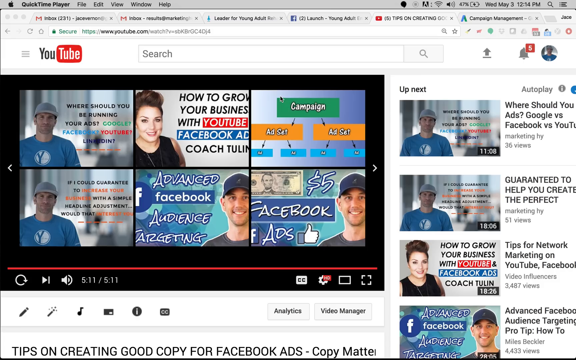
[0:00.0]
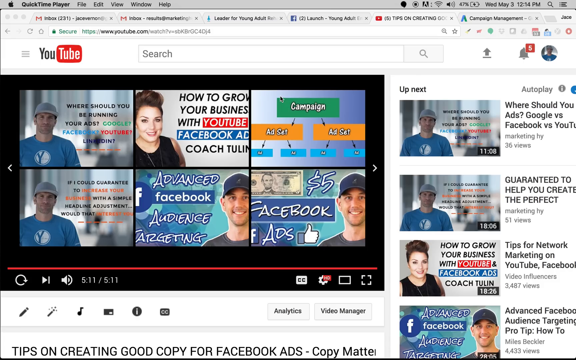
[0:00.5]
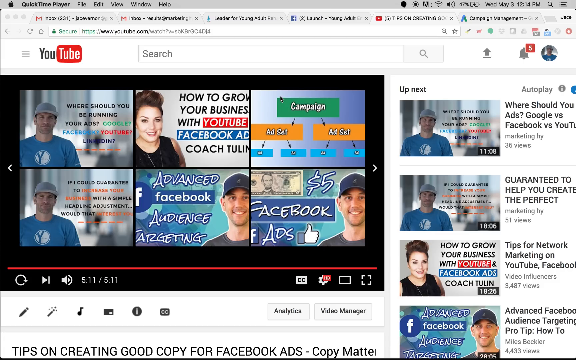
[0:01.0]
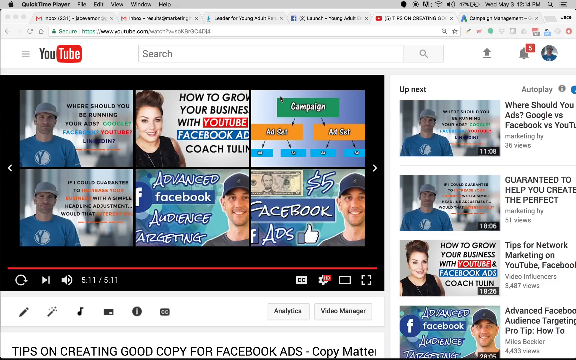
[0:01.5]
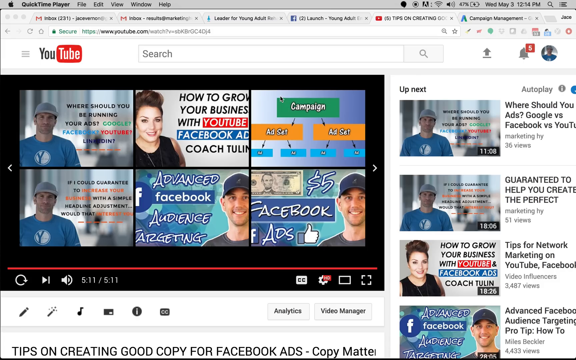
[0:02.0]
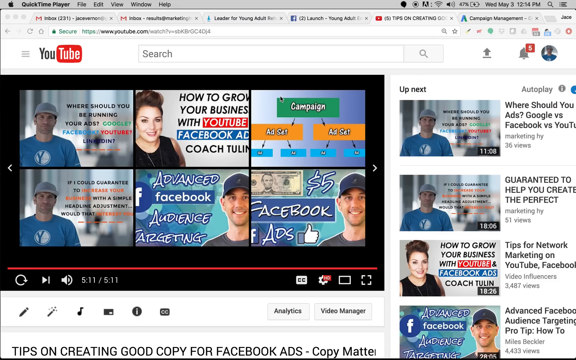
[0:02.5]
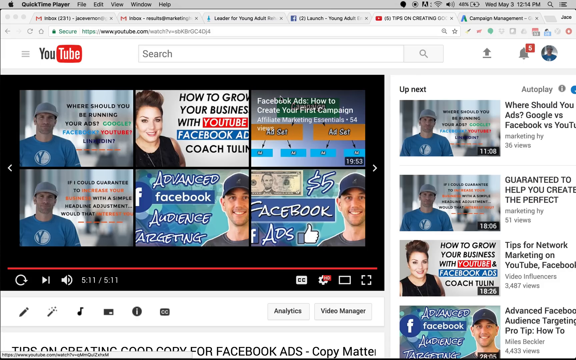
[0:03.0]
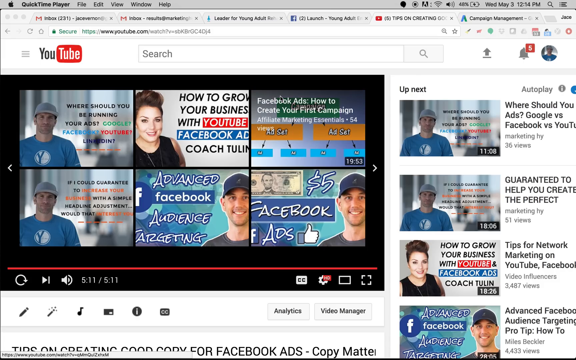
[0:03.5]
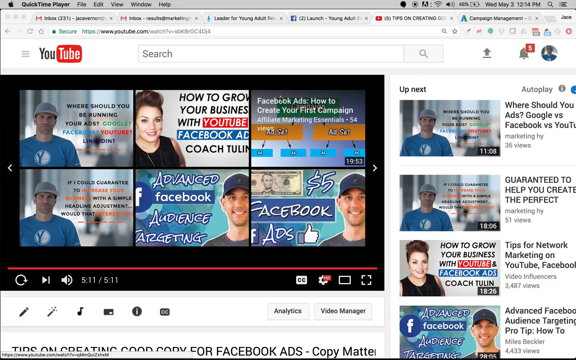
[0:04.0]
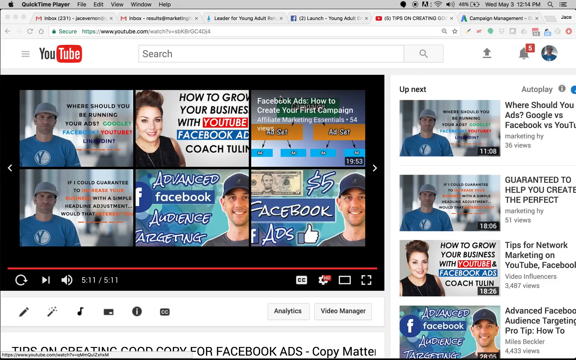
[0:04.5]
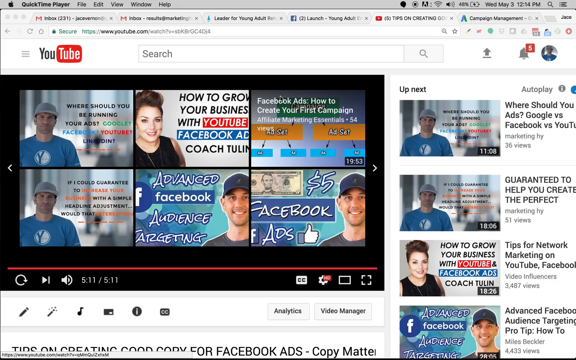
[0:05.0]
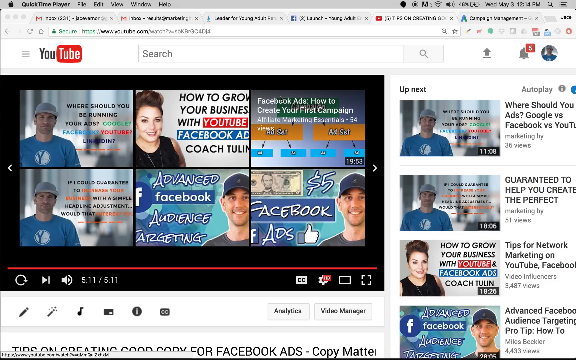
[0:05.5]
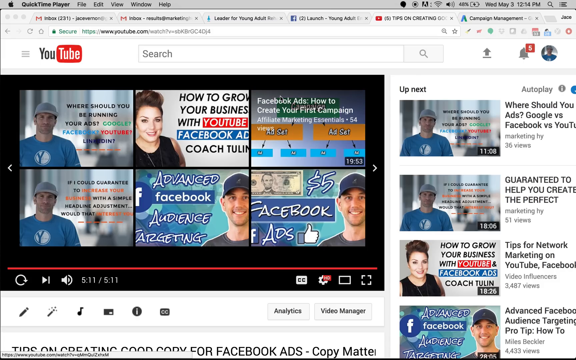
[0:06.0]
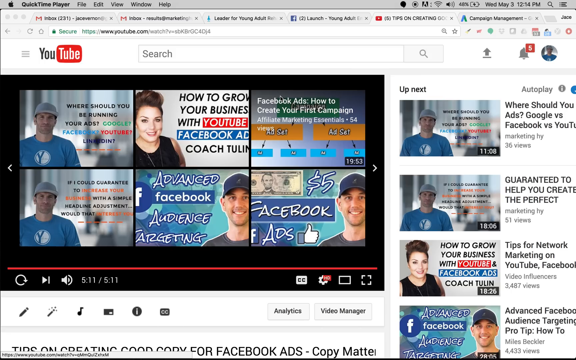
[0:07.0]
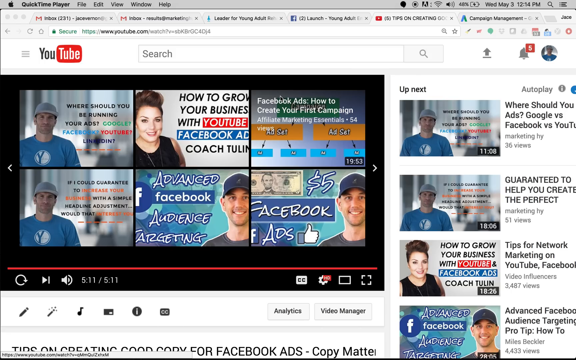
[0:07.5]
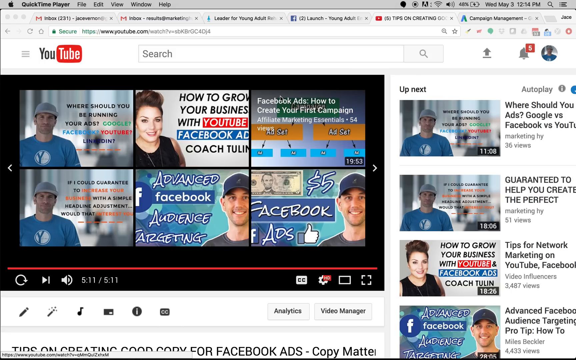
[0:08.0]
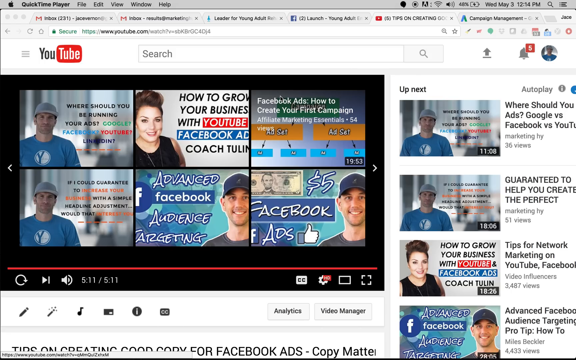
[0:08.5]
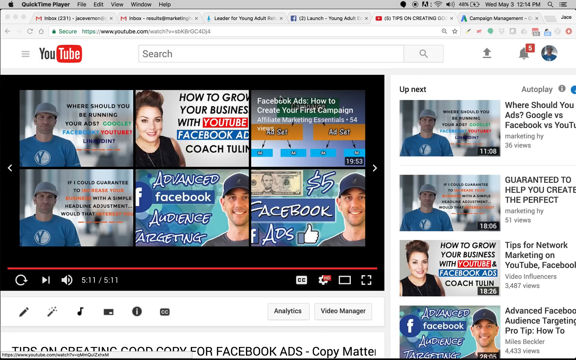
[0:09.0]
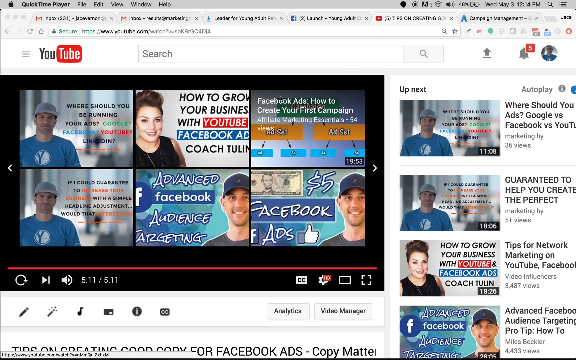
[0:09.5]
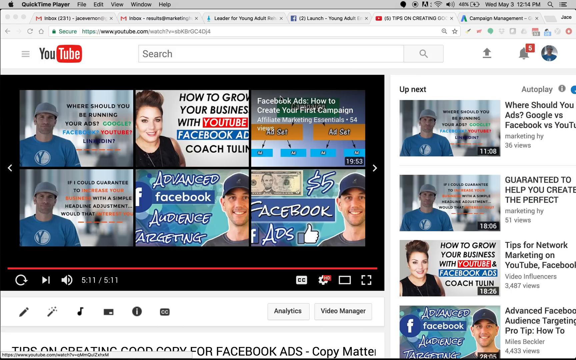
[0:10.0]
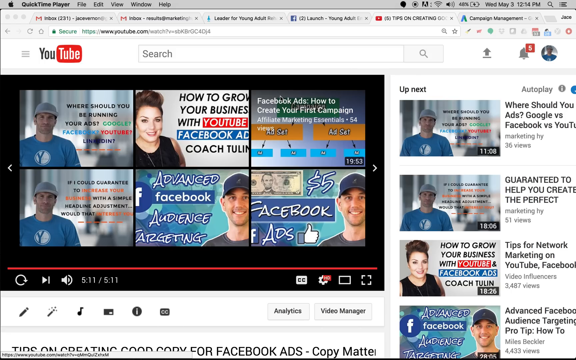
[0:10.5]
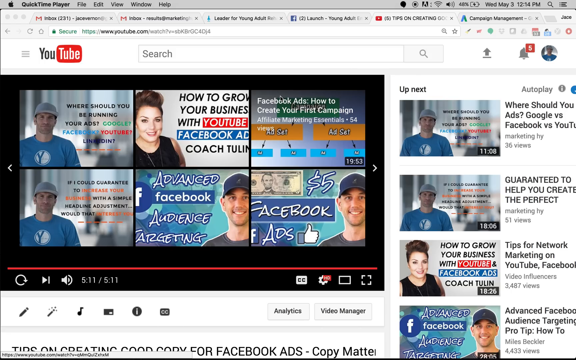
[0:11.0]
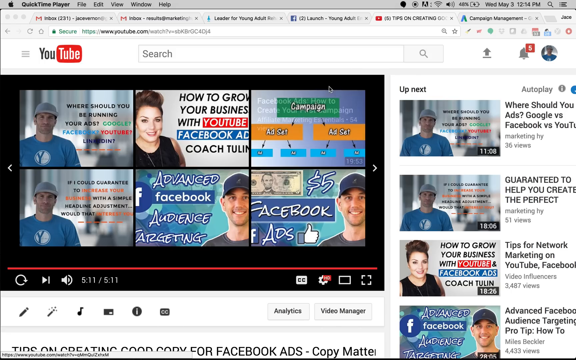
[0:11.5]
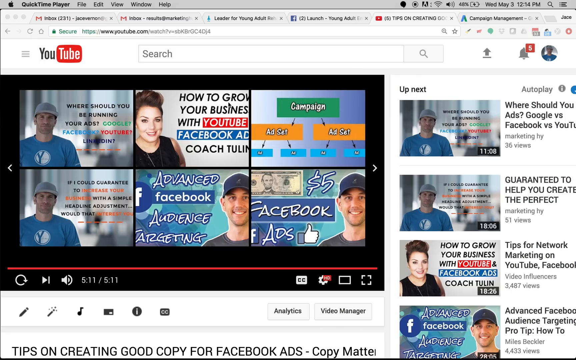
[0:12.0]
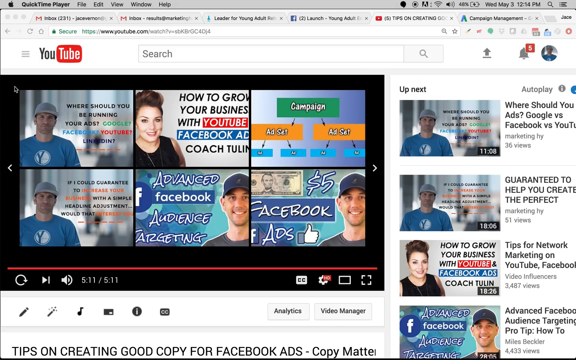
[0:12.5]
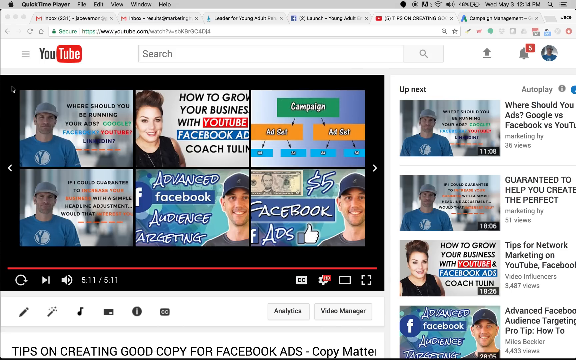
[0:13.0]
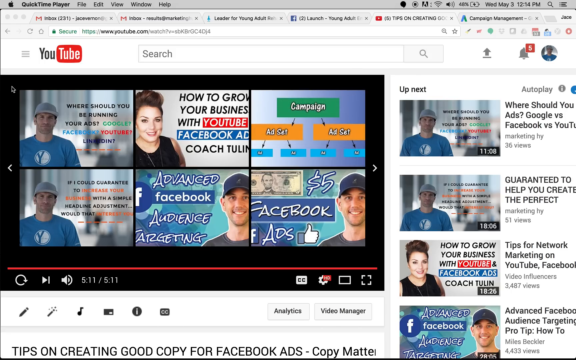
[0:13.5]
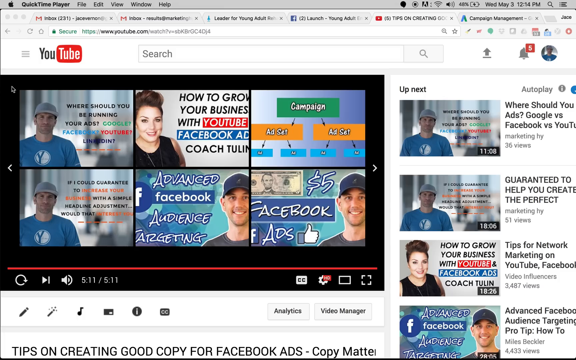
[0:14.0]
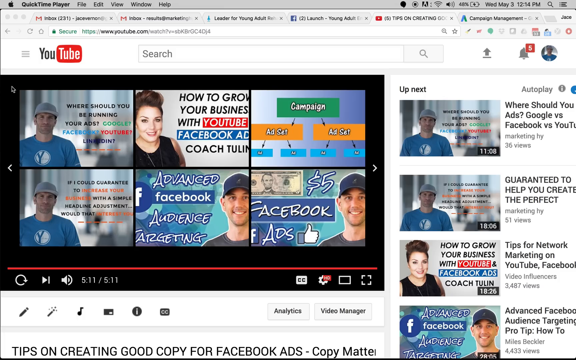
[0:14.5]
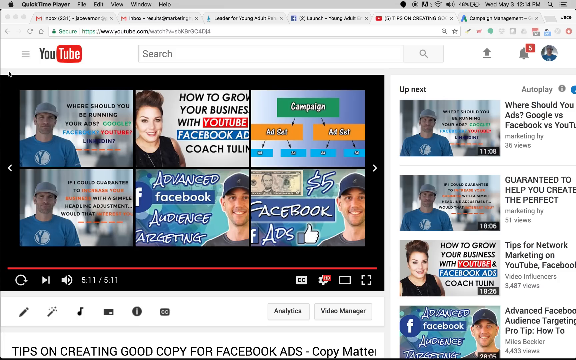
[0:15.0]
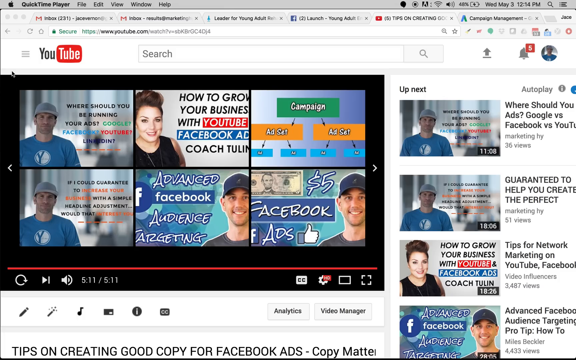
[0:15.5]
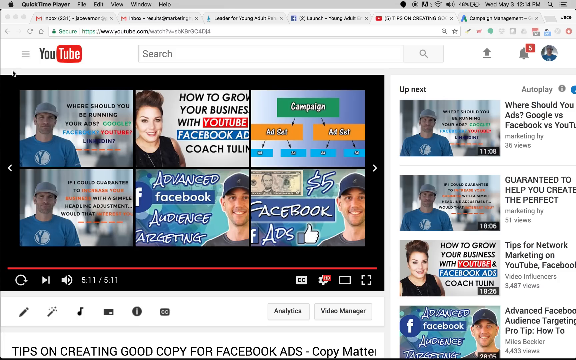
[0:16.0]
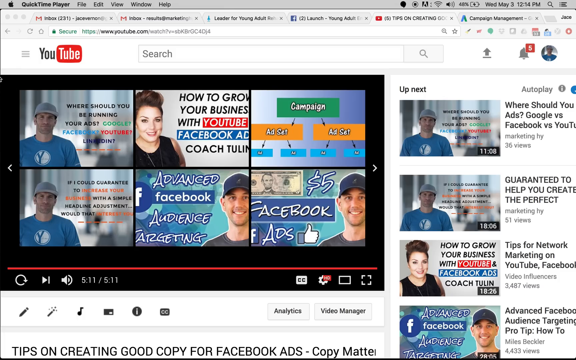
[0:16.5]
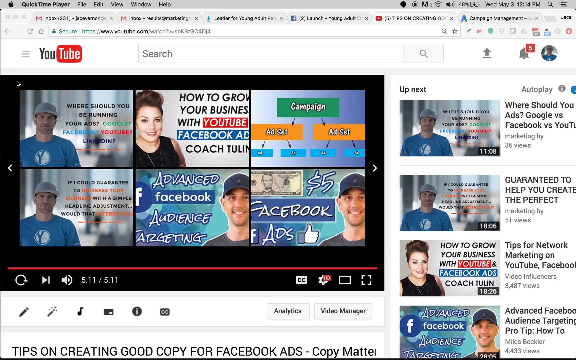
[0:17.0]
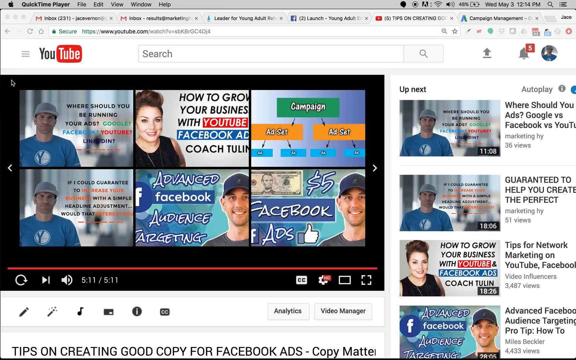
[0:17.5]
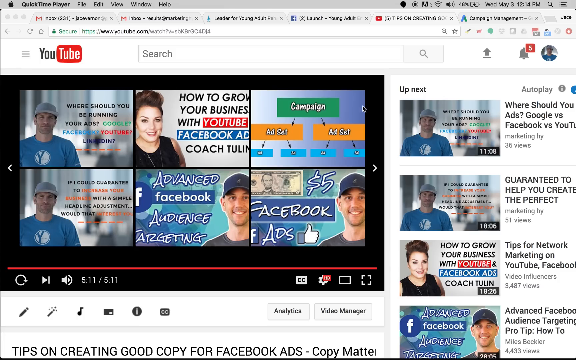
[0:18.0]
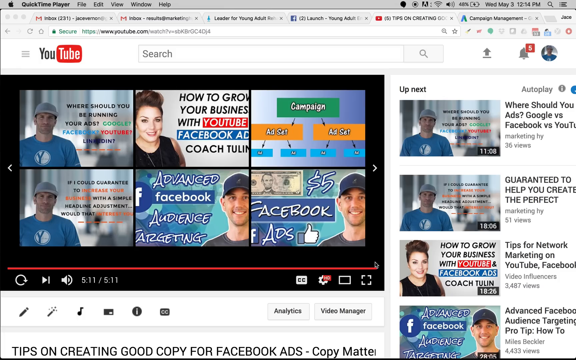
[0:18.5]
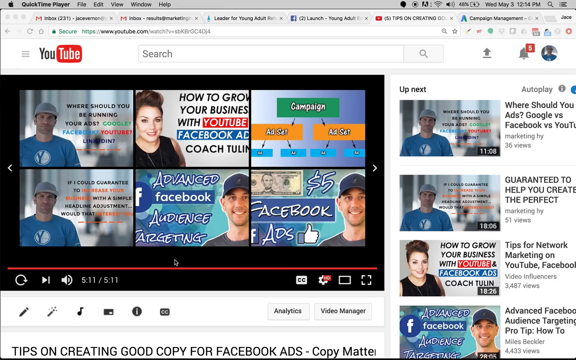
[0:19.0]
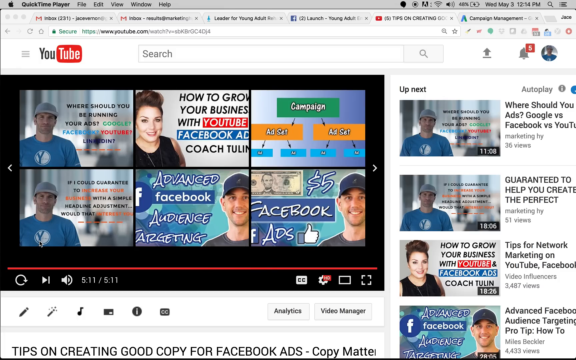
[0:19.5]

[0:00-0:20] A YouTube video is open in a browser tab. The video is 5 minutes and 11 seconds long and shows the captions "how to grow your business with YouTube Facebook ad coach" and "advanced Facebook audience targeting". On the right-hand side, other videos are listed as coming up next, including "where should you add Google versus Facebook versus YouTube", "guaranteed to help you create the perfect ad" and "tips for network marketing on YouTube Facebook". Whoever chose the video is moving a mouse around on the screen, so the video has been made by someone looking at their computer screen. The computer is an Apple Mac, with the Apple logo in the top left-hand corner.